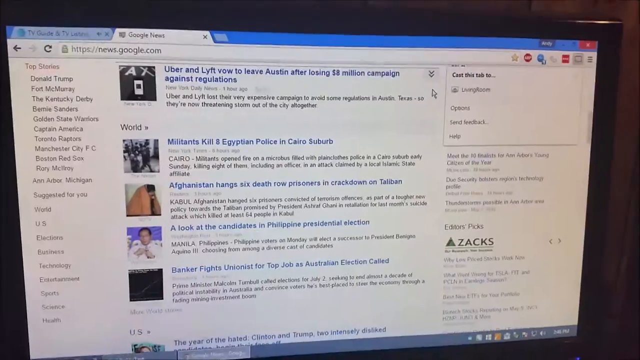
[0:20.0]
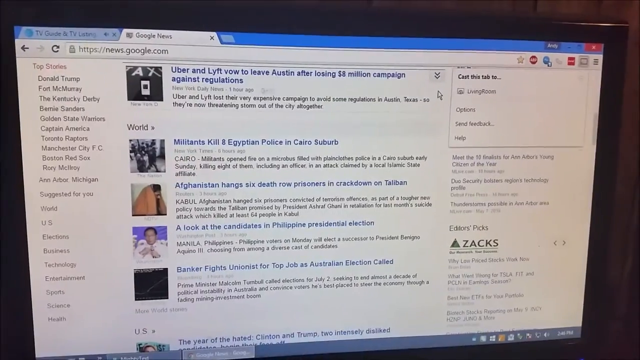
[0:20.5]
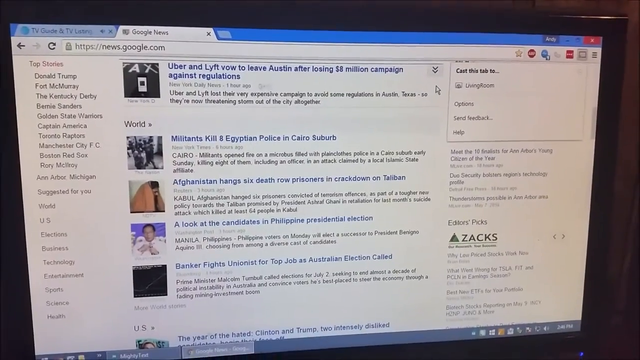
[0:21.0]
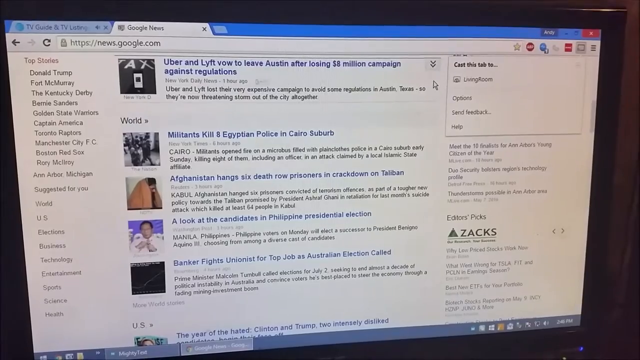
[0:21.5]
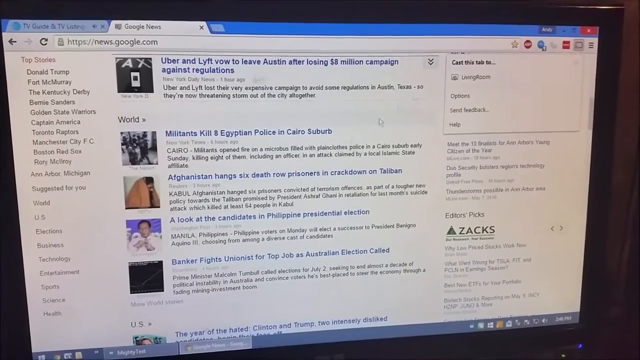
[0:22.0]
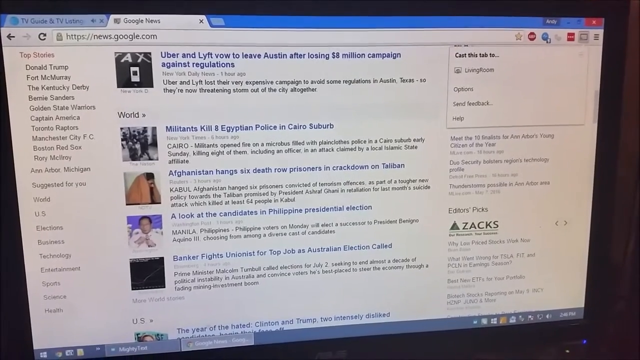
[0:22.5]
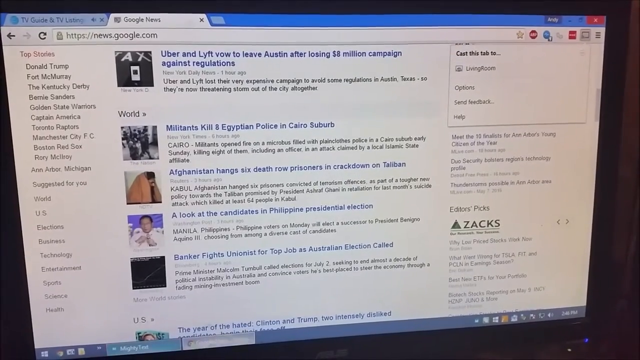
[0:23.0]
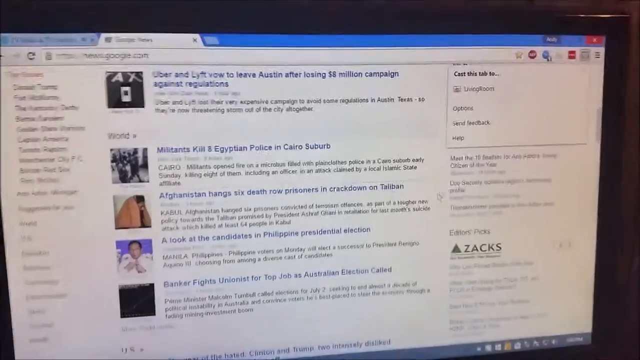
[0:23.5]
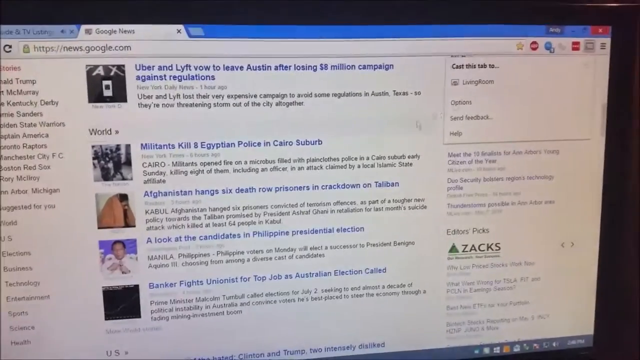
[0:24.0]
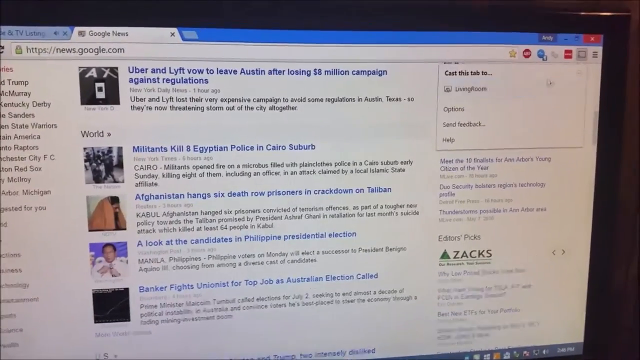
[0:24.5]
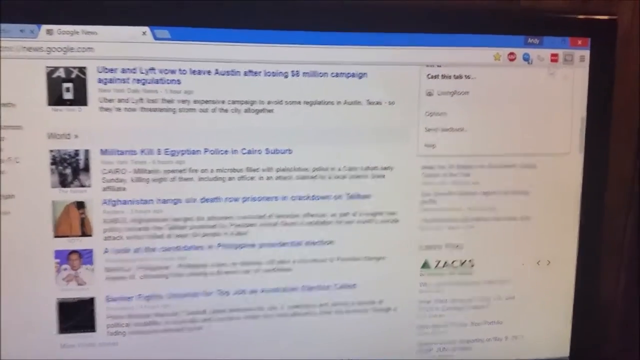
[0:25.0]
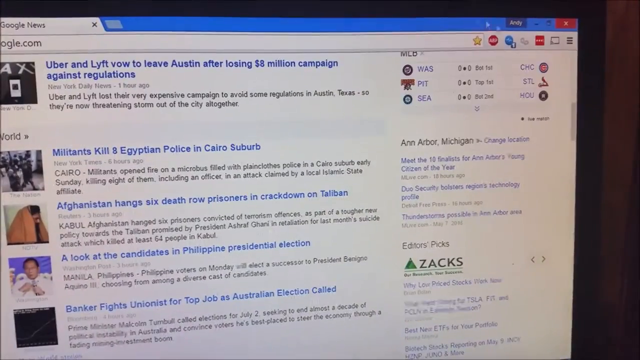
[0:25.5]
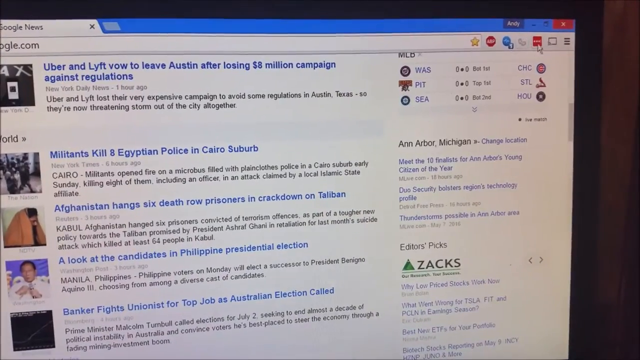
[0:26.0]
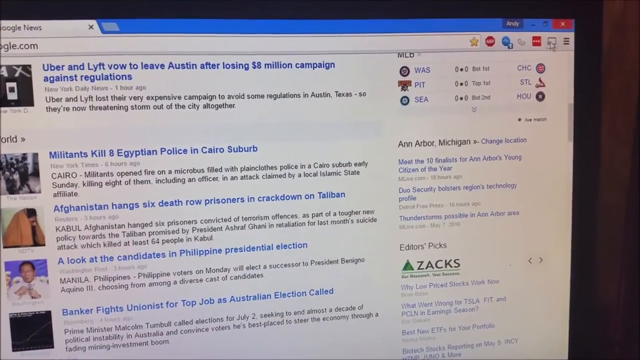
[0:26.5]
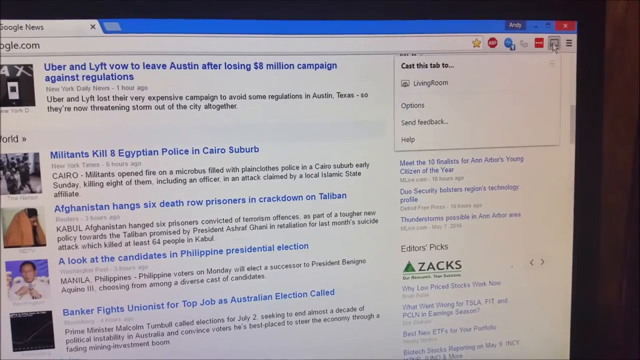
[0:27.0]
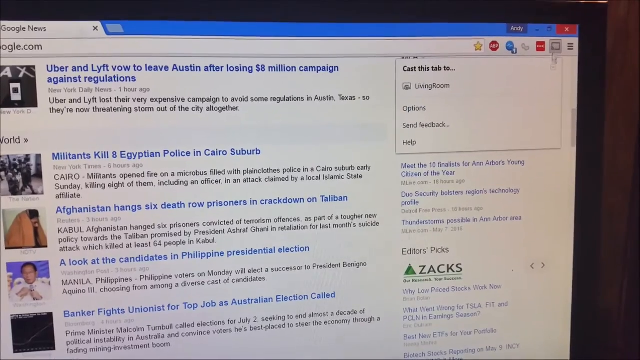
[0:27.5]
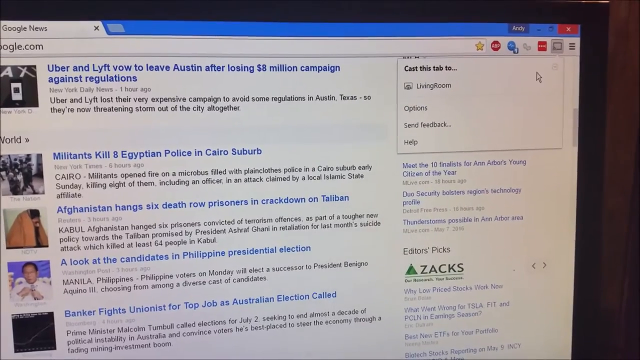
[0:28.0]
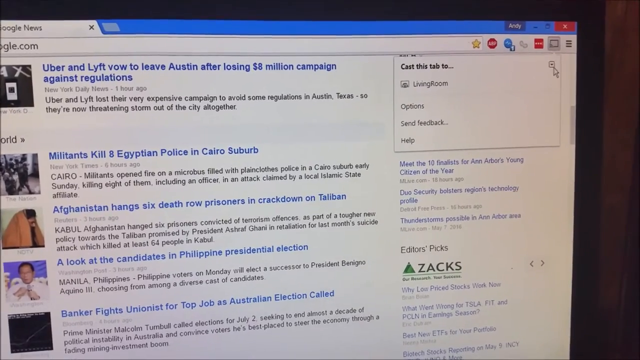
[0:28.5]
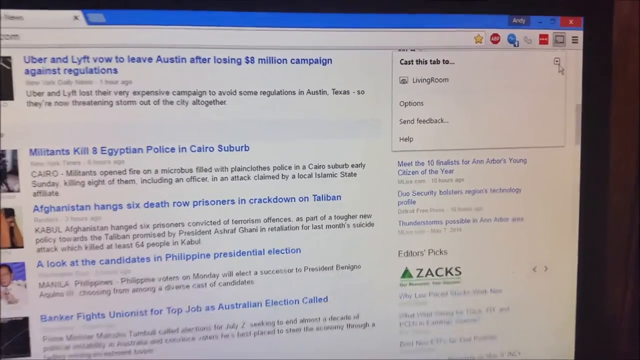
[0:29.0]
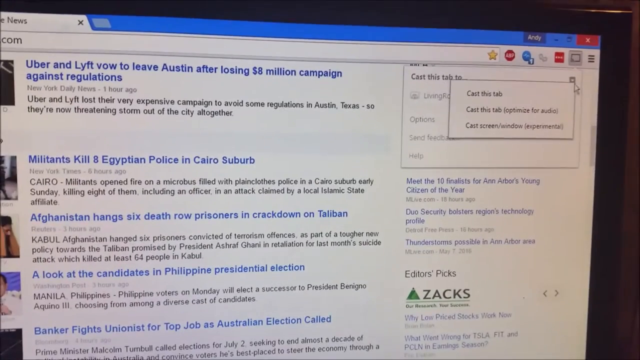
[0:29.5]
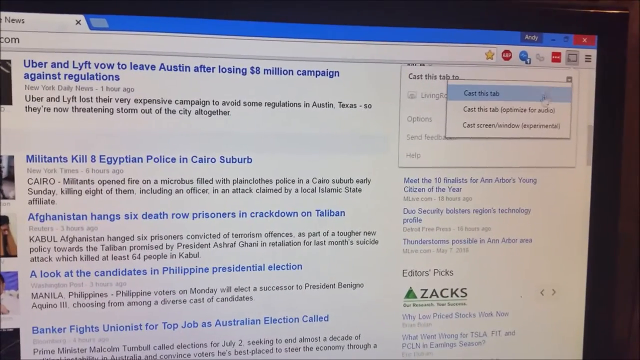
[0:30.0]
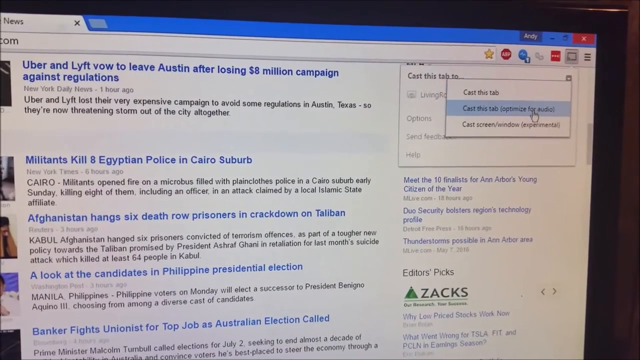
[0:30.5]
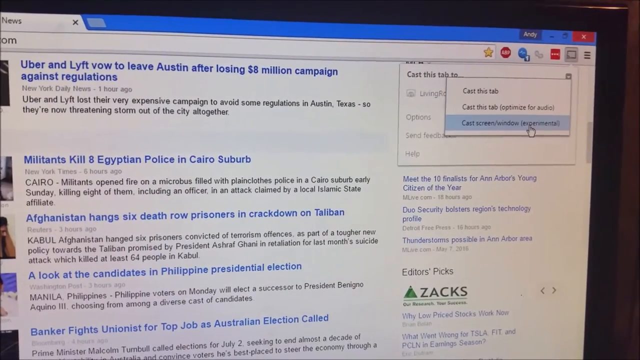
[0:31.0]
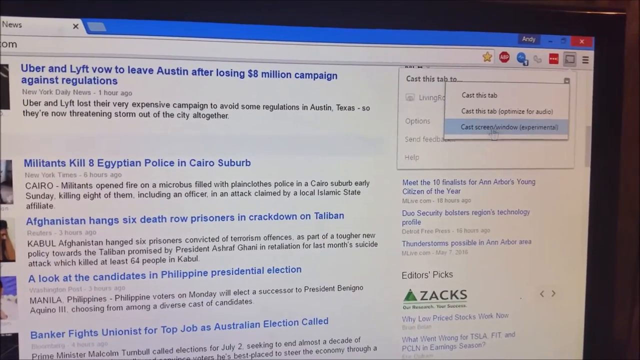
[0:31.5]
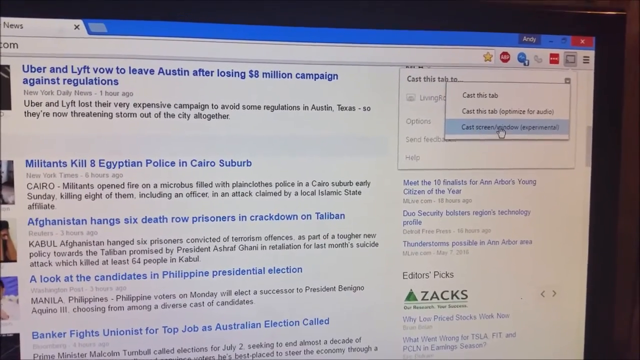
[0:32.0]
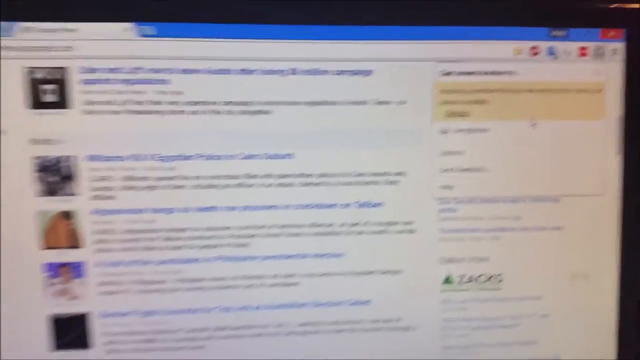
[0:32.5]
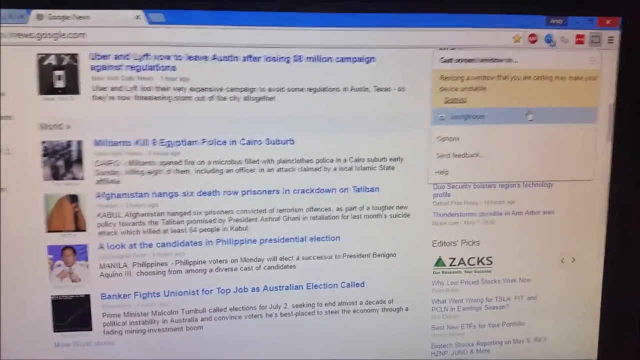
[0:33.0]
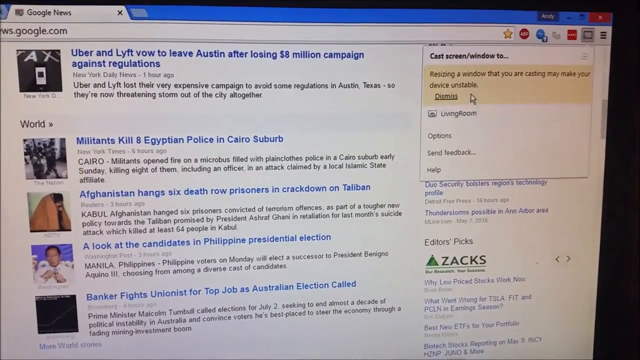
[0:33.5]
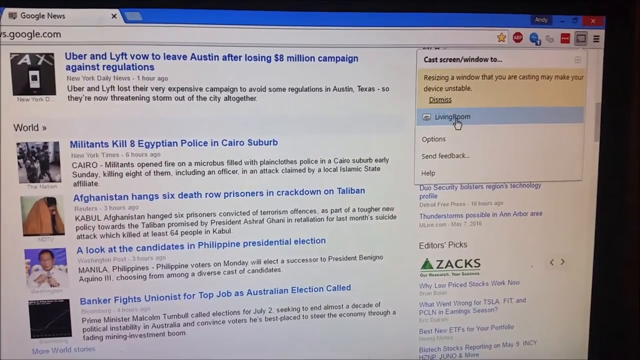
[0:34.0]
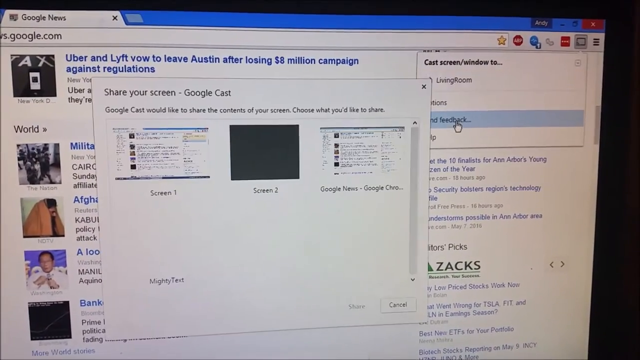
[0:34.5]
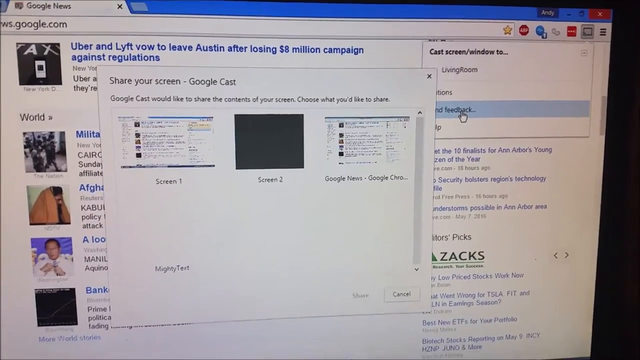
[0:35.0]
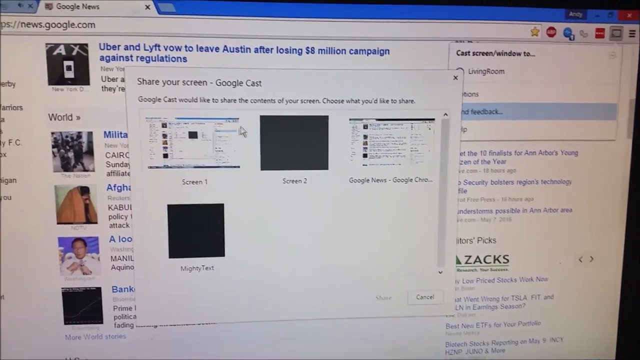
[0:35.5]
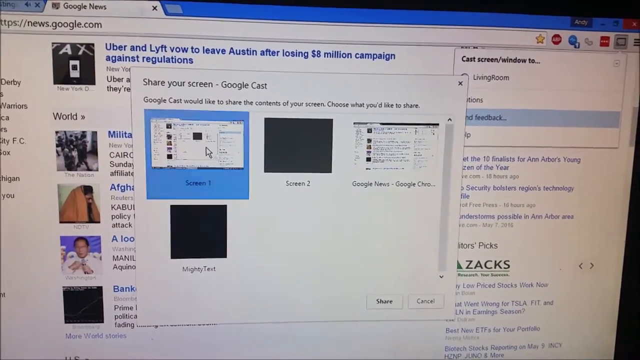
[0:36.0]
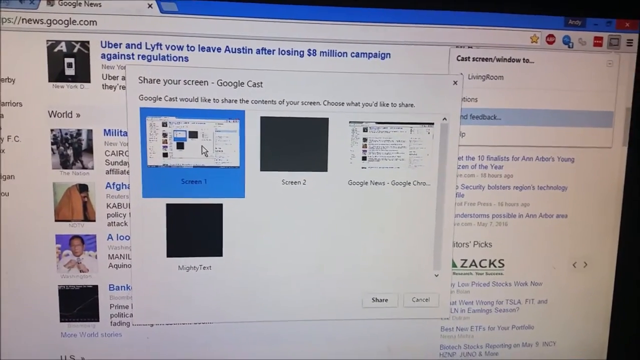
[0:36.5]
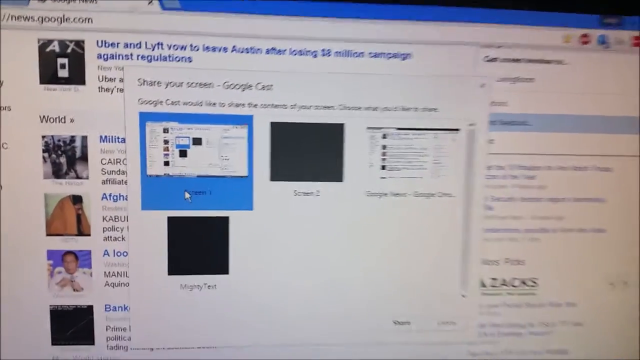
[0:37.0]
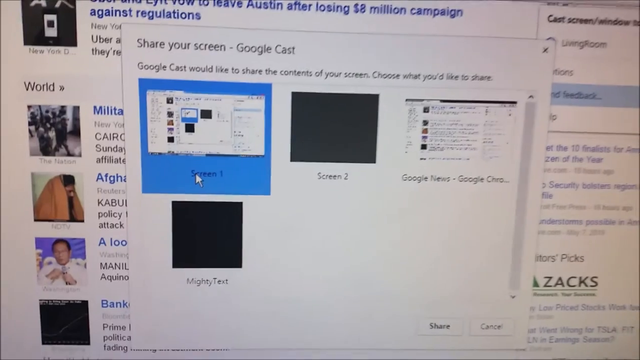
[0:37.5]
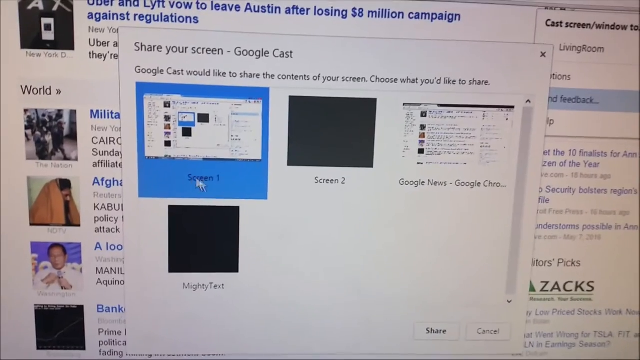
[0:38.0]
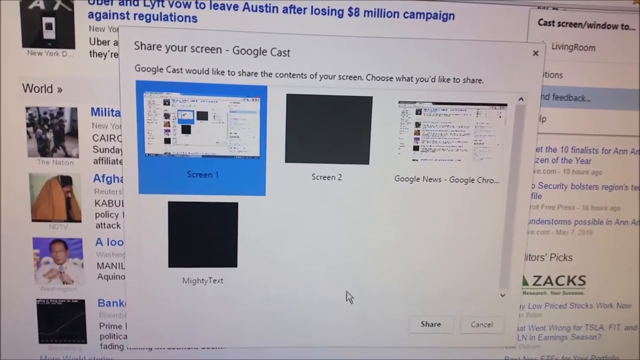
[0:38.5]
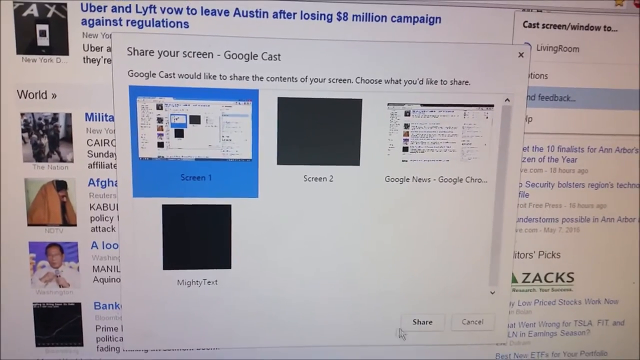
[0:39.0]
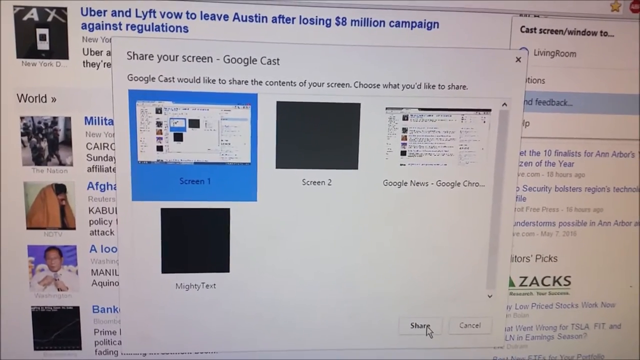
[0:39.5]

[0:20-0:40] A screen capture of a desktop shows a number of news articles from the news section of Google.com, with the URL at the very top of the screen. One article reads "Uber and Lyft vowed to leave Austin after losing $8 million in campaign against regulations," with text saying "Uber and Lyft lost a very expensive campaign to avoid some regulations in Austin, Texas. So they are threatening to storm out of the city altogether." Another section reads "militants killed eight Egyptian police in Cairo suburb." Another article reads "Afghanistan hanged six death row prisoners in crackdown on Taliban." There is also "a look at the candidates in Philippine presidential election," with text saying "Philippines voters on Monday will elect a successor."